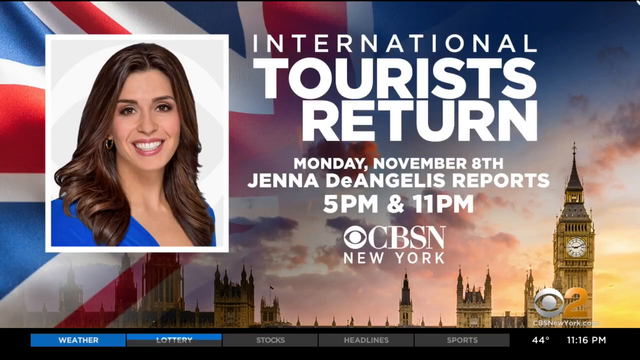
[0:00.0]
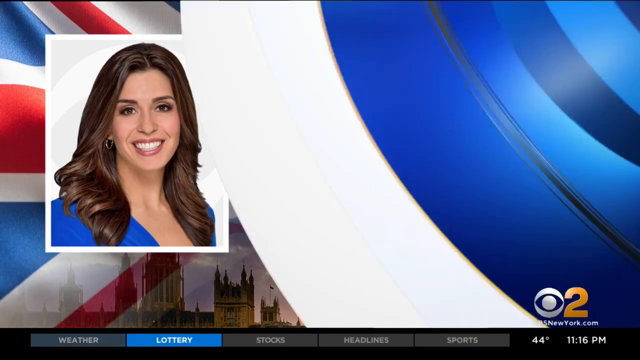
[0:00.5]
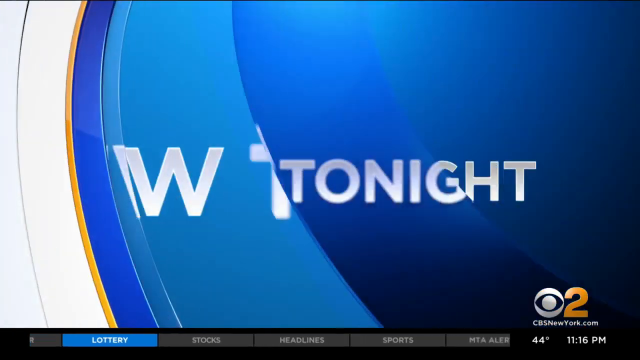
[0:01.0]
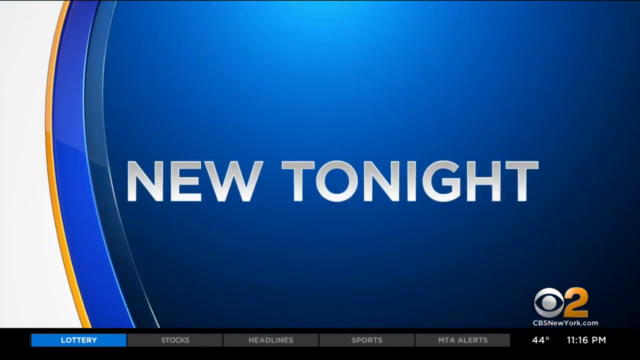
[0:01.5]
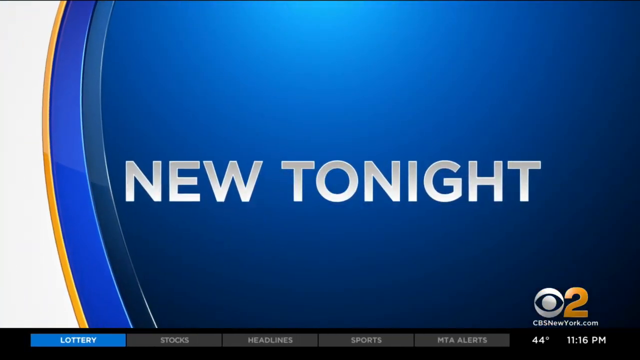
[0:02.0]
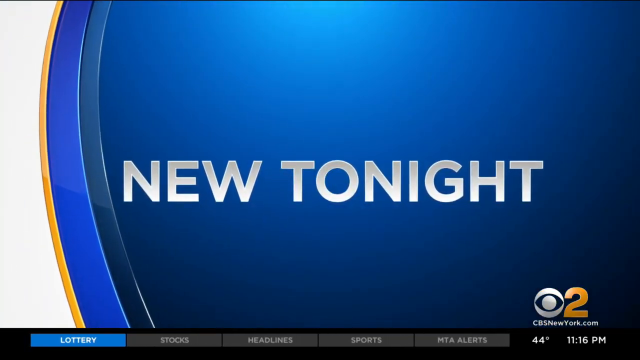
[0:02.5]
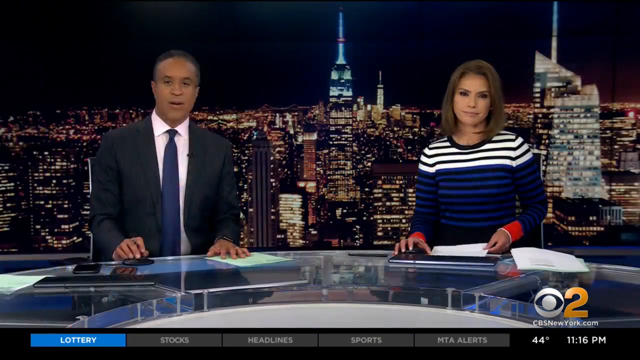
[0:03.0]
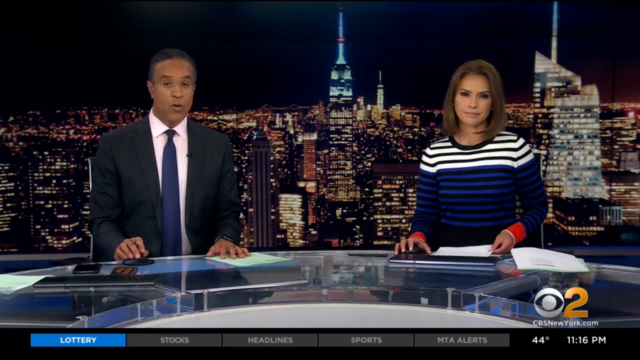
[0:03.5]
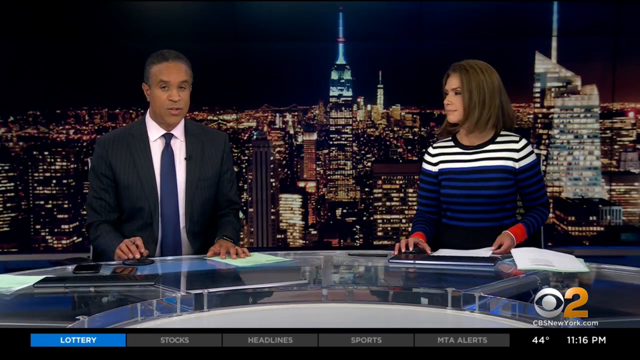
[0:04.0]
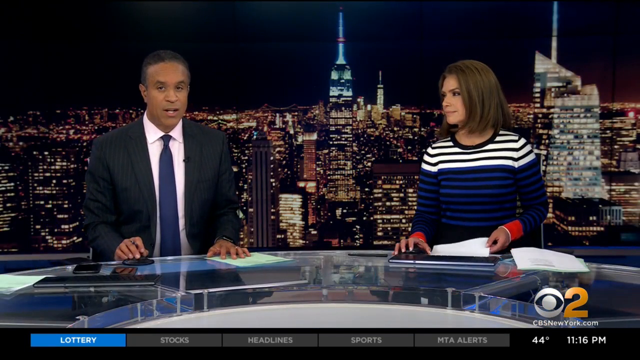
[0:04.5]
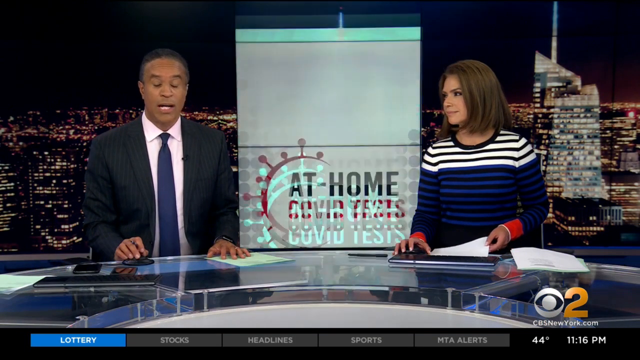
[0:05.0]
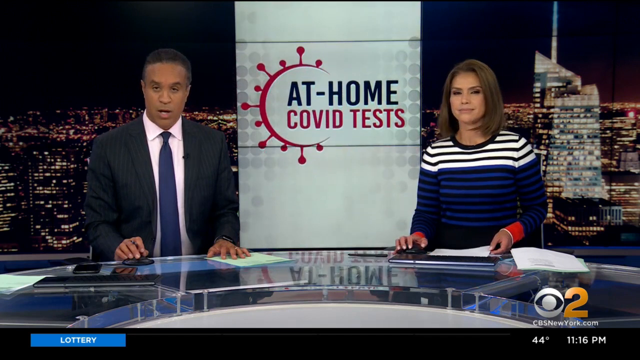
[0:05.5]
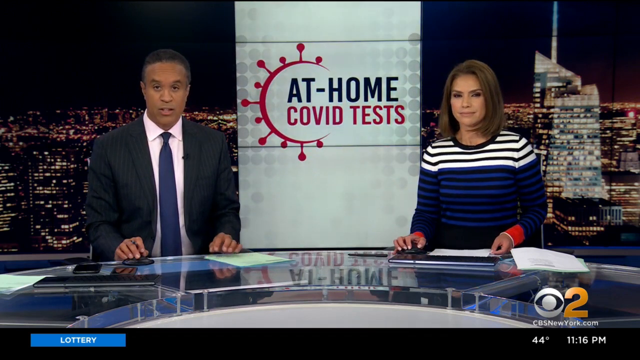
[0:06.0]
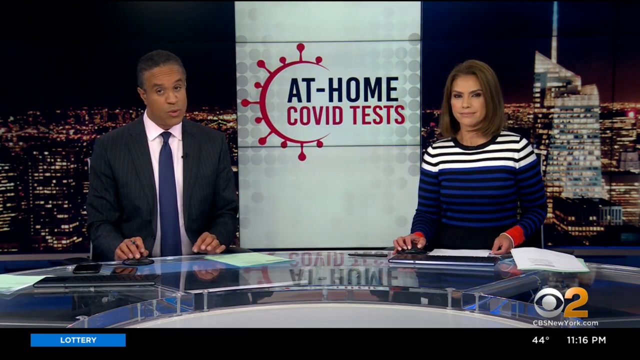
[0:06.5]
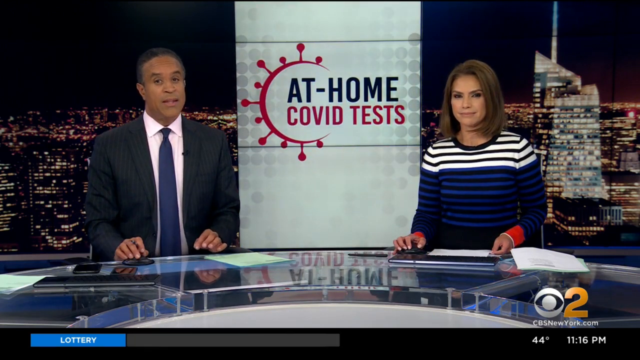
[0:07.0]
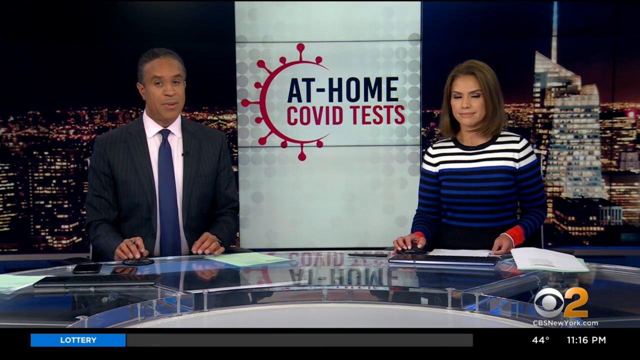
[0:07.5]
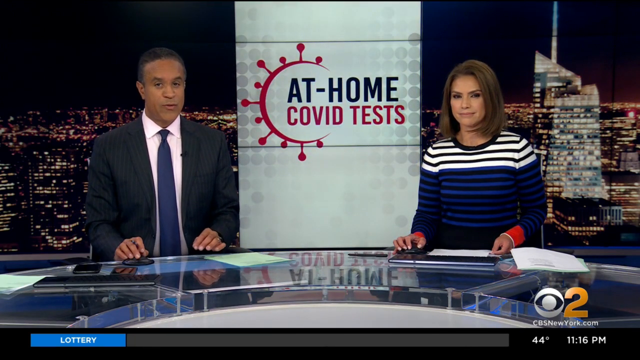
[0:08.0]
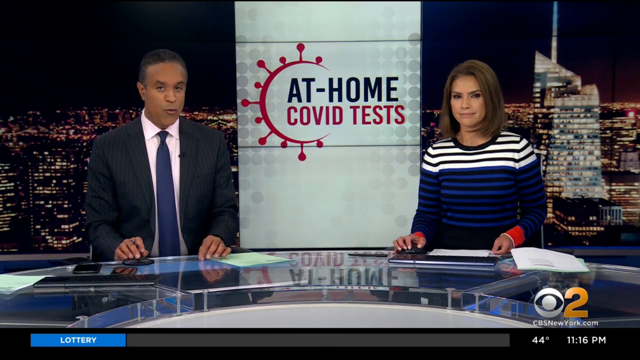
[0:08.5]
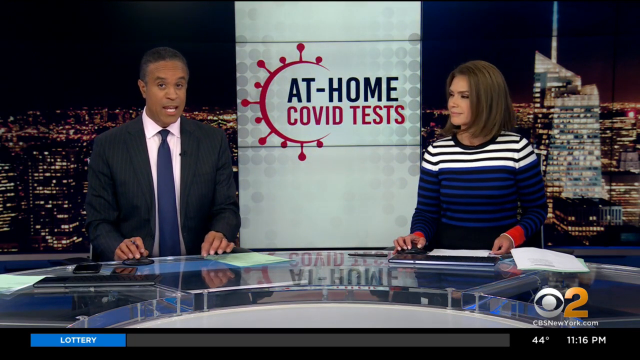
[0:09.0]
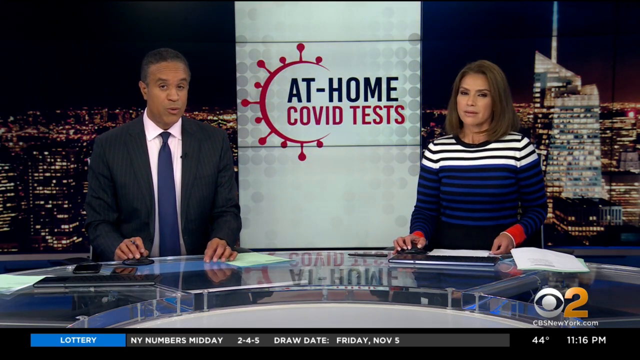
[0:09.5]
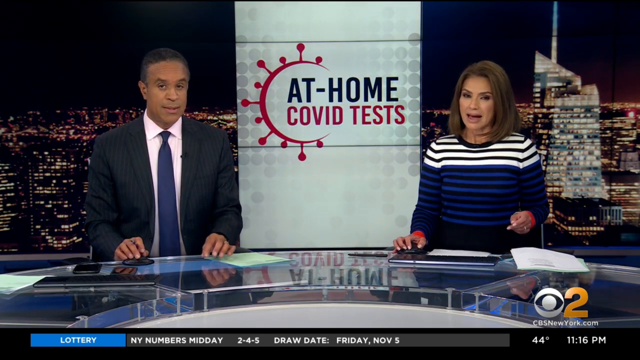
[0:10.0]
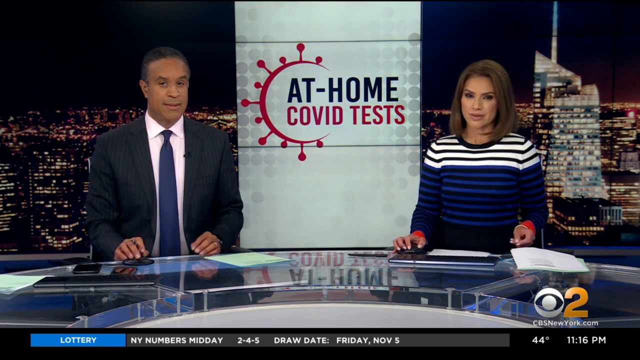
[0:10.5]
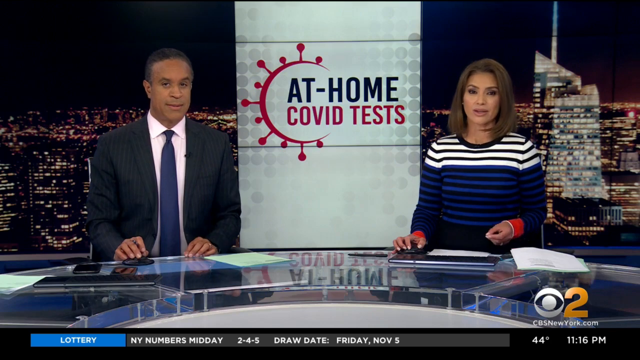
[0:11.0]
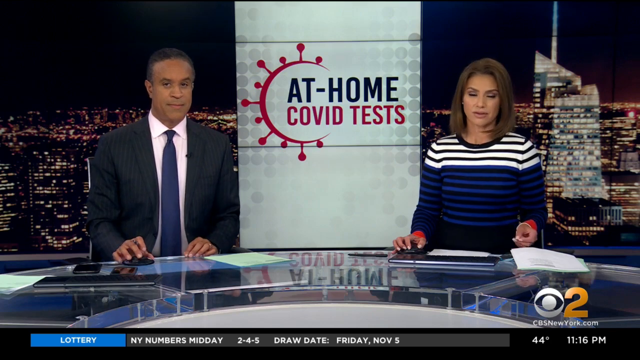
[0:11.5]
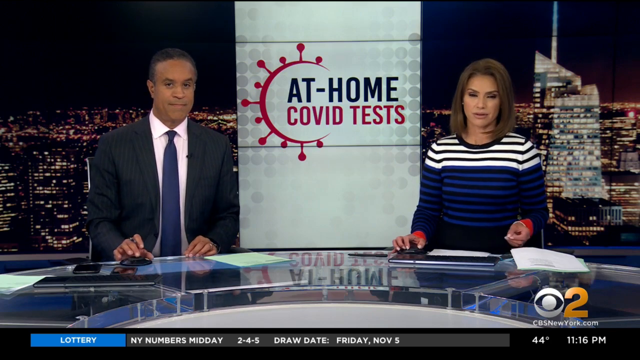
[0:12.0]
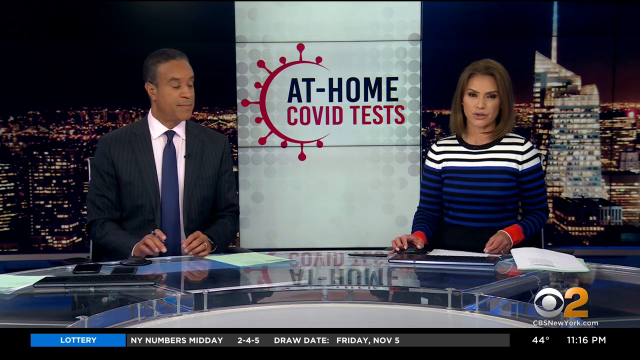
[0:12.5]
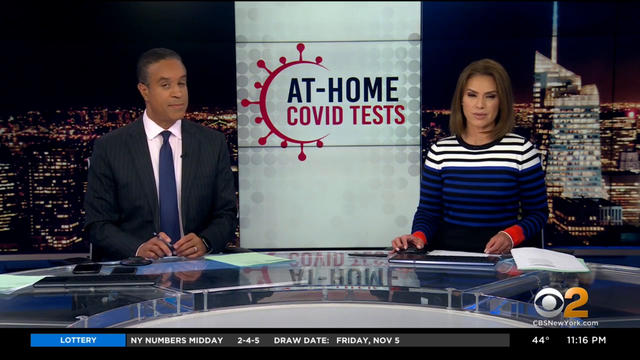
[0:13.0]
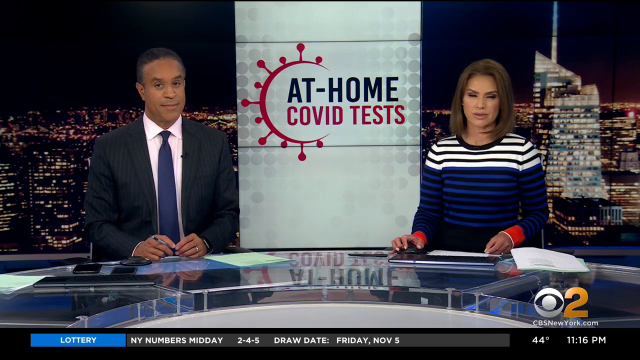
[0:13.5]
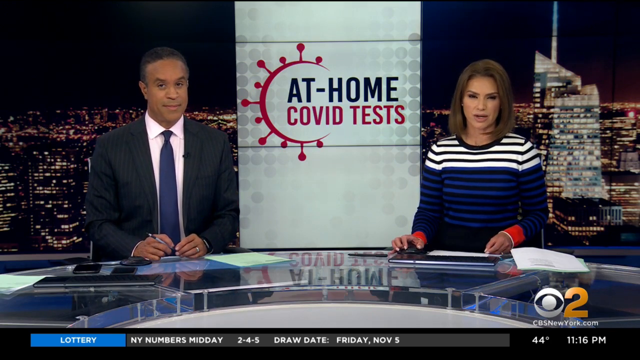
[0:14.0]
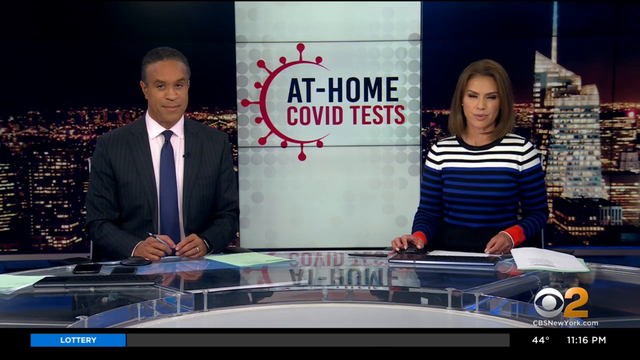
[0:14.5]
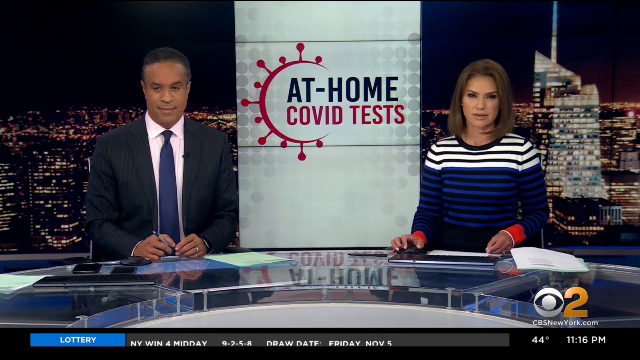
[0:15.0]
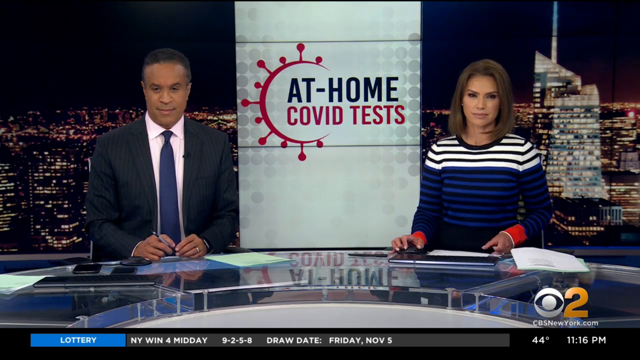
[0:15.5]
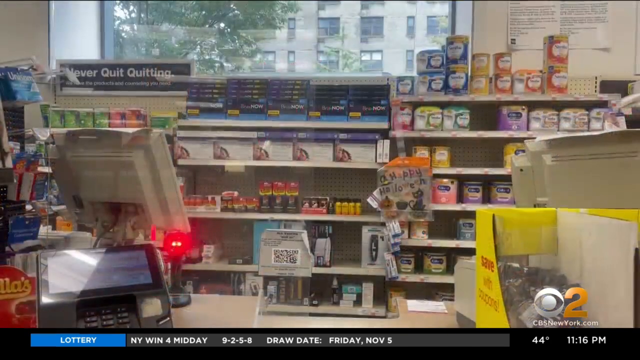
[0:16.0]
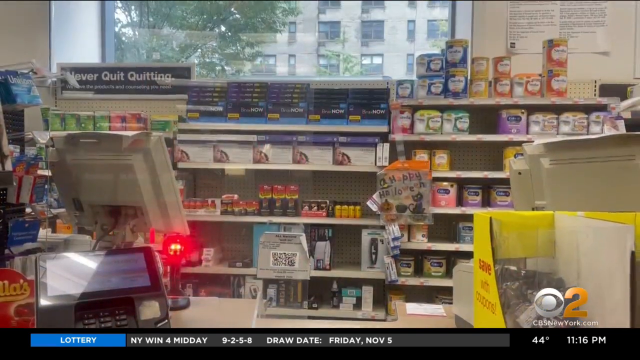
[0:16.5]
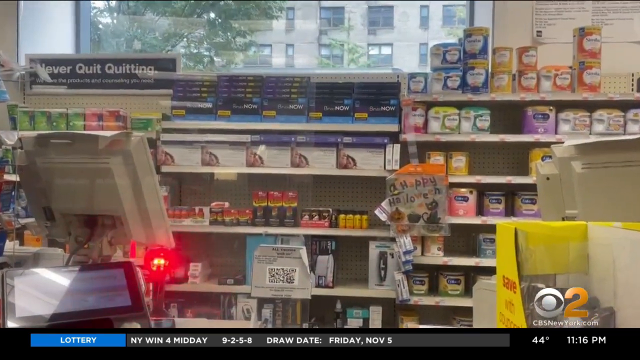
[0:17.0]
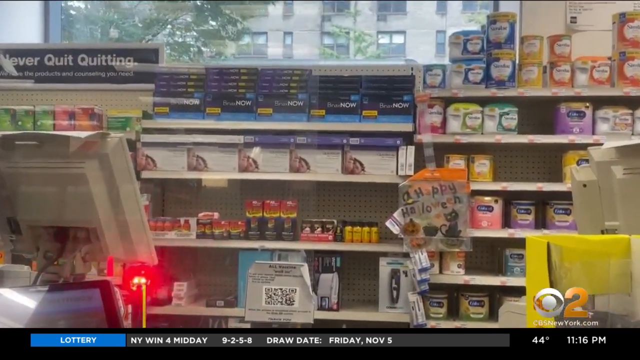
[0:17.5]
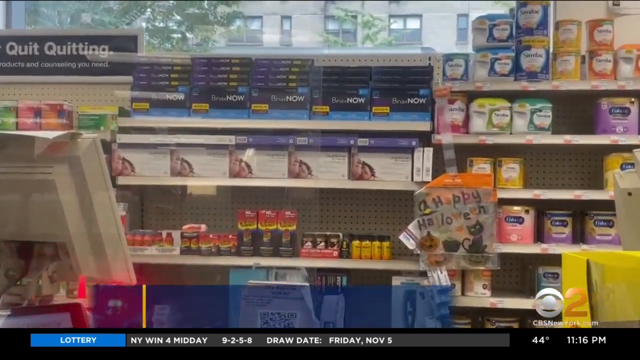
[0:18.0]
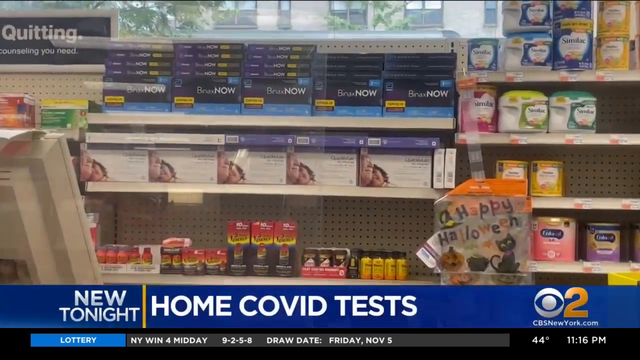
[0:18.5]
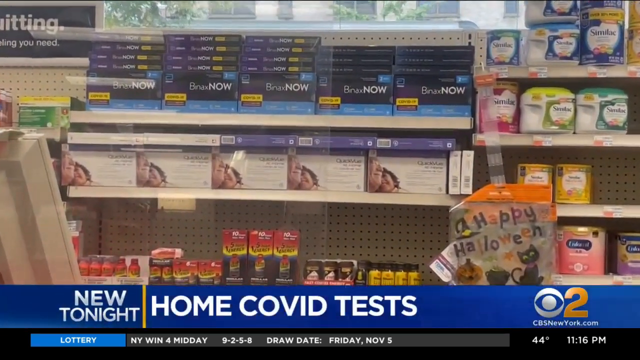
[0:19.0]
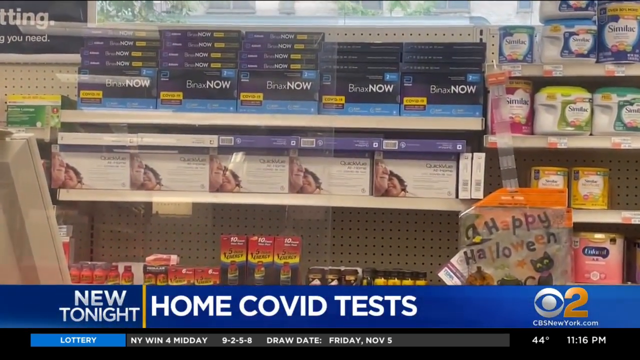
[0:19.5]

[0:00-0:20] A woman appears in a box on the left-hand side of the screen. She has long brown hair, is smiling, and wears a blue shirt and hoop earrings. Behind her are a flag and various buildings. A banner reads "International Tourist Return Monday, November 8th. Jenna DeAngelis reports 5 p.m. and 11 p.m. CBSN New York." The video then goes to "New Tonight" and changes to two newscasters sitting in the newsroom, reporting on at-home COVID tests, with a banner about the tests popping up between them that shows the story is about COVID-19 and testing for it at home. Next comes a shot of home COVID tests being sold in stores, and the camera gets close up to the store shelf, where a COVID test called BinaxNOW is shown.